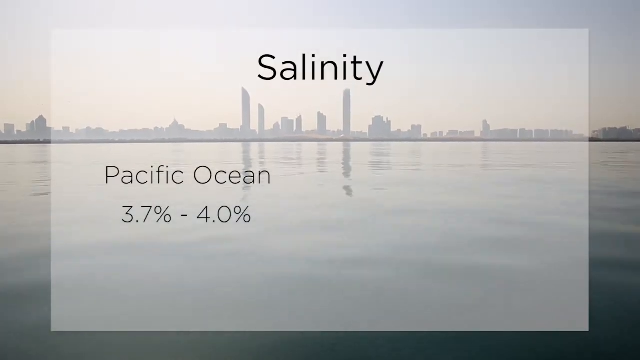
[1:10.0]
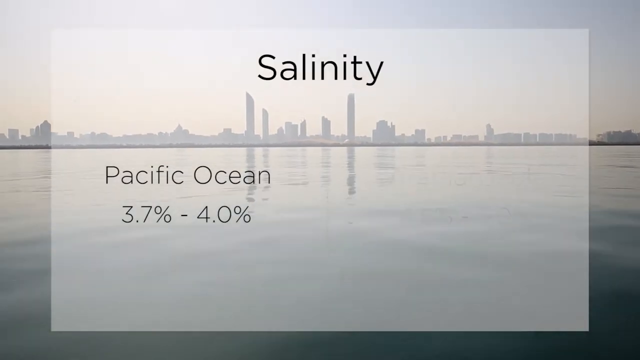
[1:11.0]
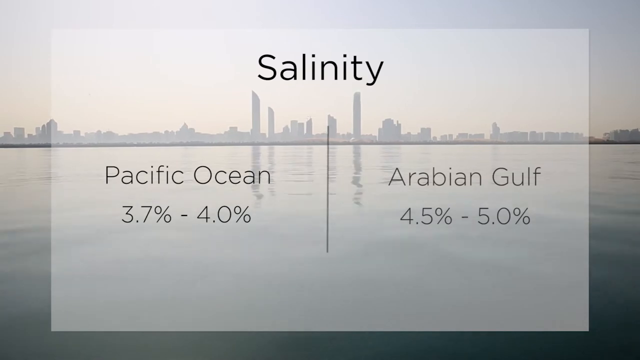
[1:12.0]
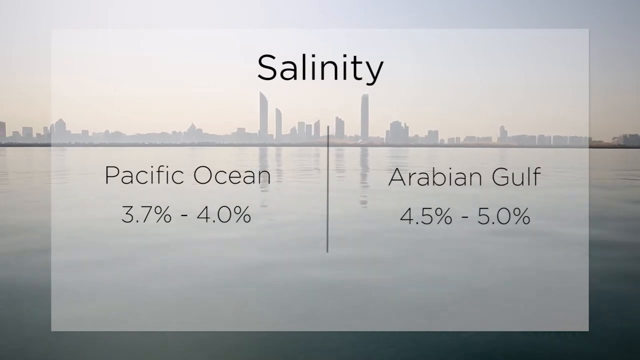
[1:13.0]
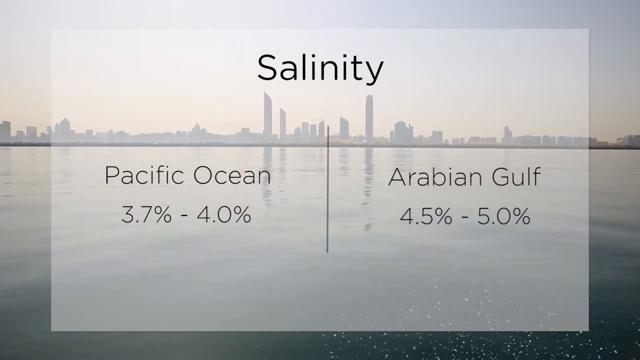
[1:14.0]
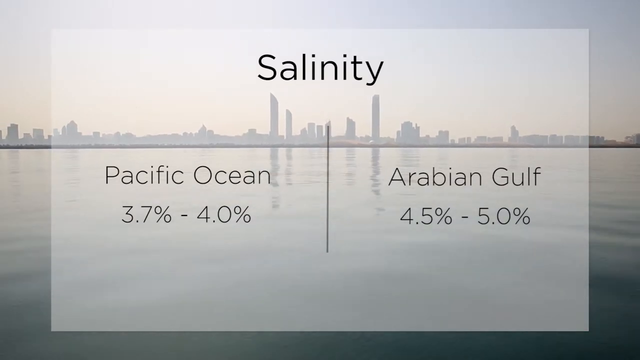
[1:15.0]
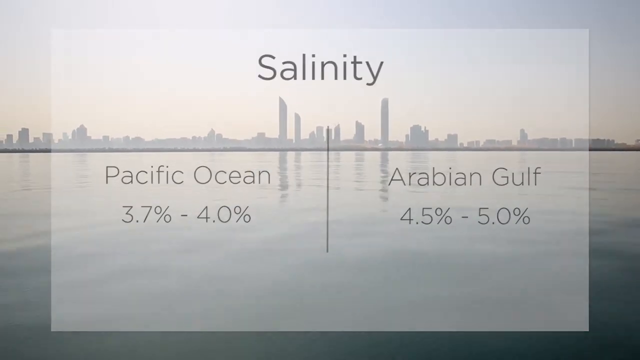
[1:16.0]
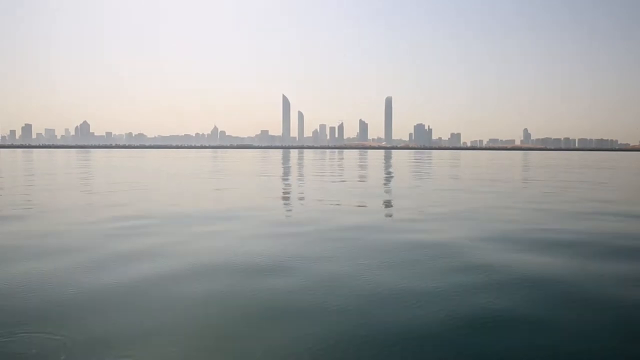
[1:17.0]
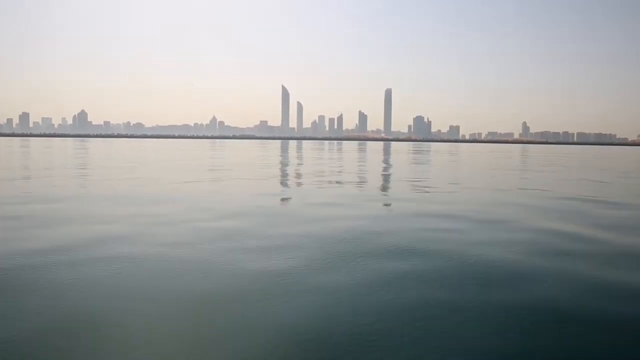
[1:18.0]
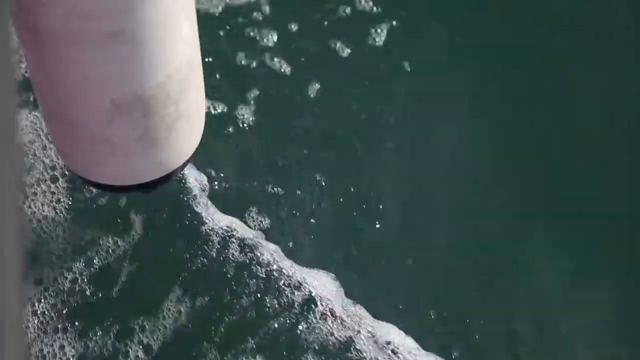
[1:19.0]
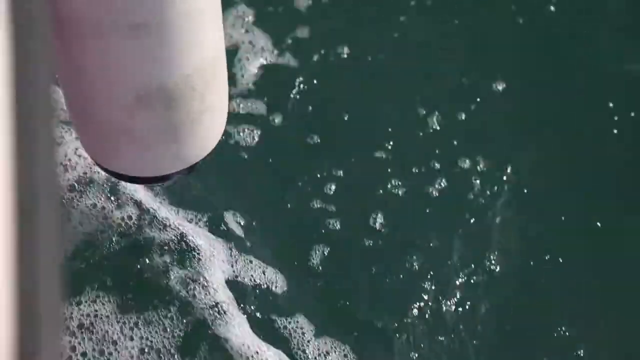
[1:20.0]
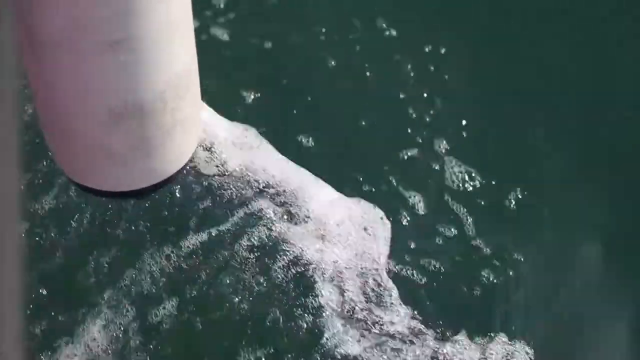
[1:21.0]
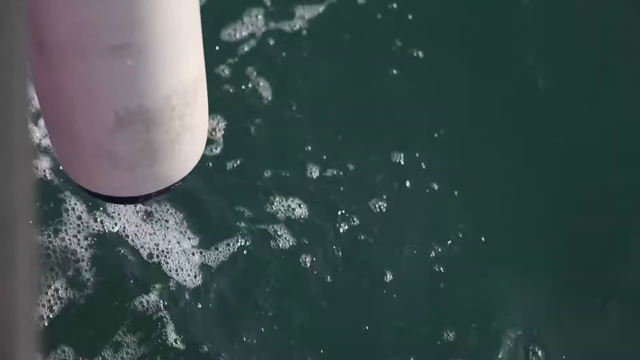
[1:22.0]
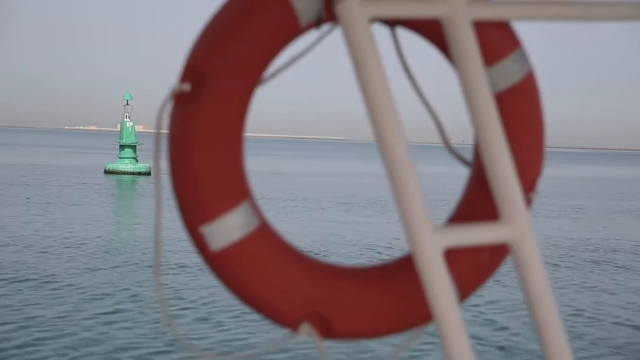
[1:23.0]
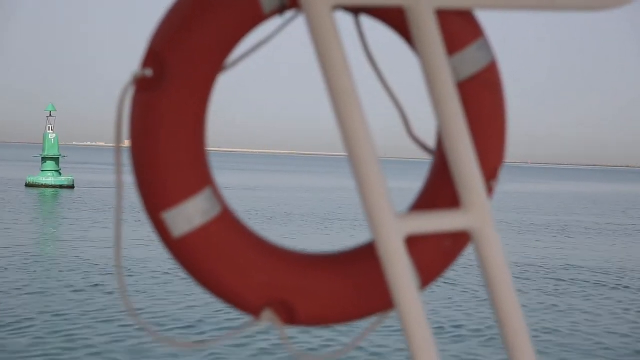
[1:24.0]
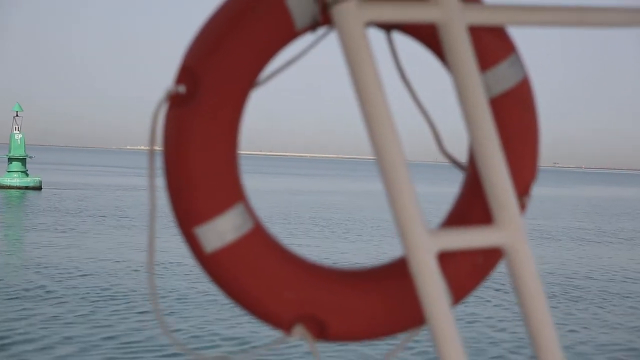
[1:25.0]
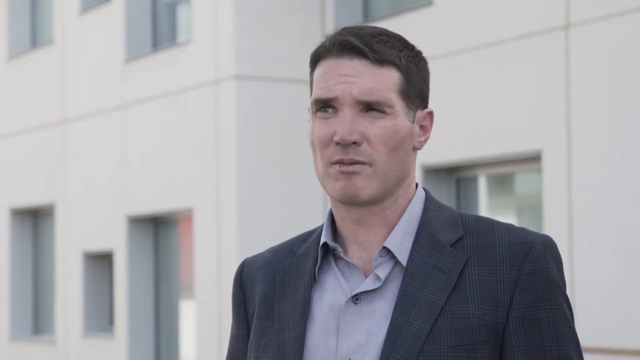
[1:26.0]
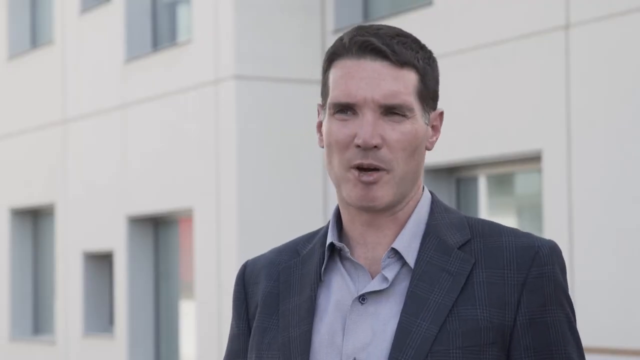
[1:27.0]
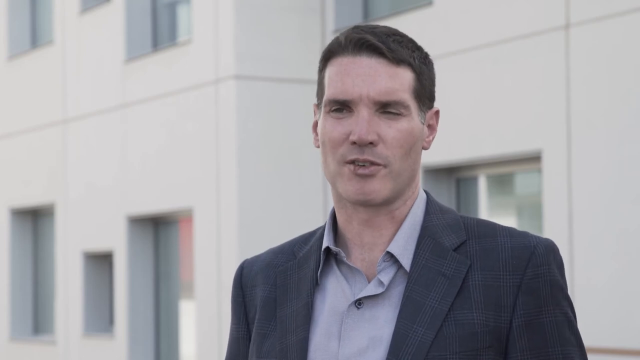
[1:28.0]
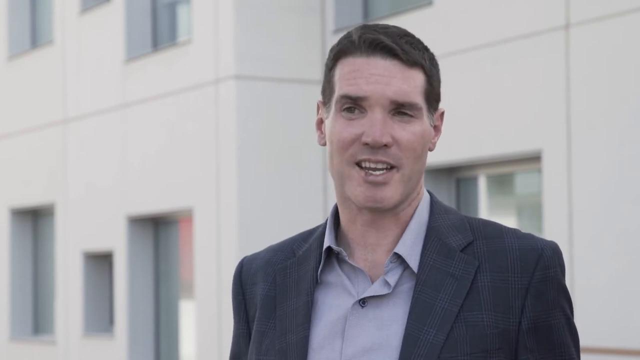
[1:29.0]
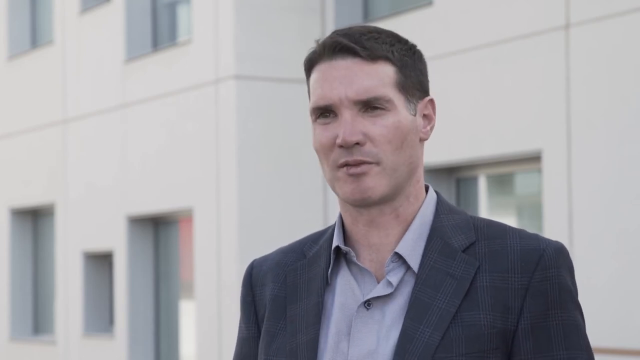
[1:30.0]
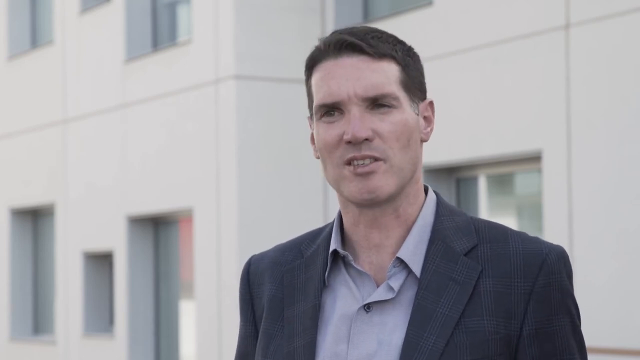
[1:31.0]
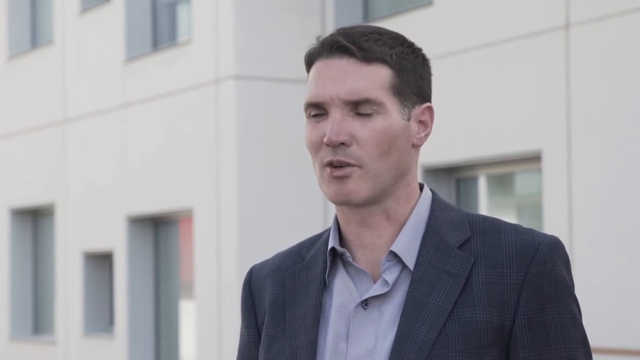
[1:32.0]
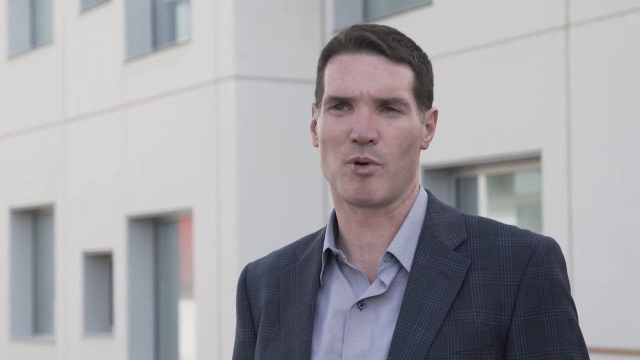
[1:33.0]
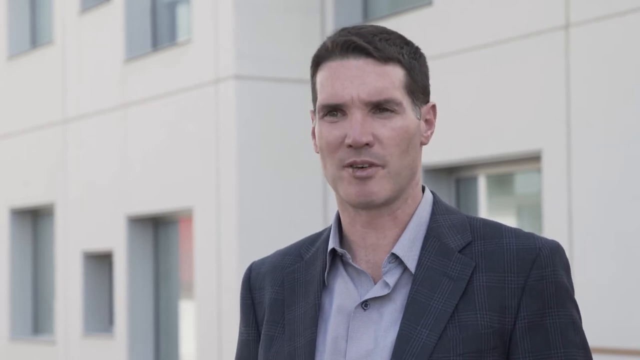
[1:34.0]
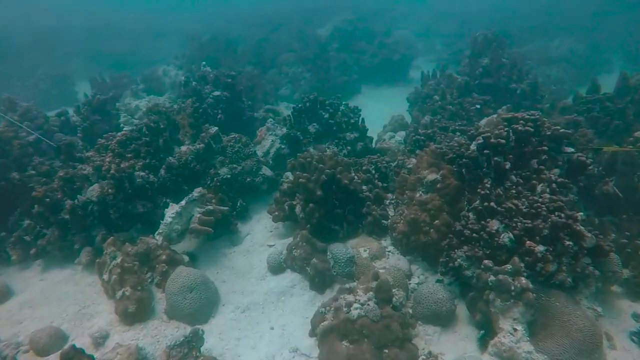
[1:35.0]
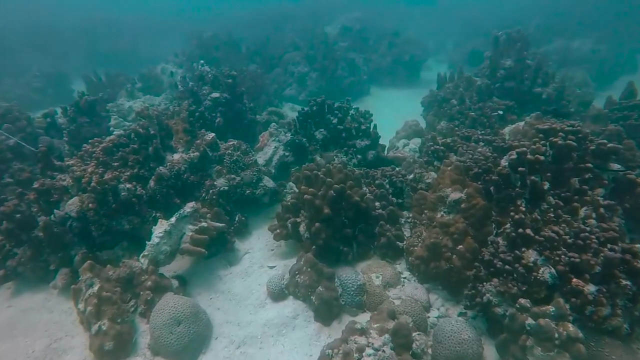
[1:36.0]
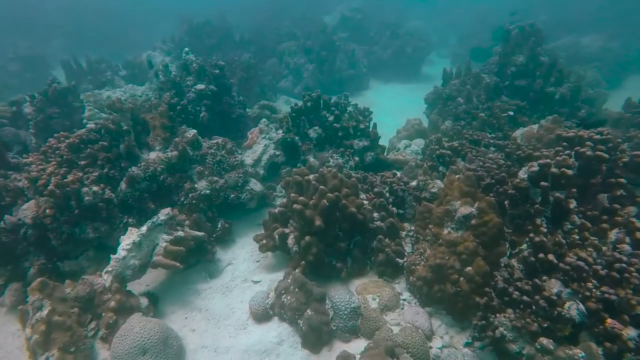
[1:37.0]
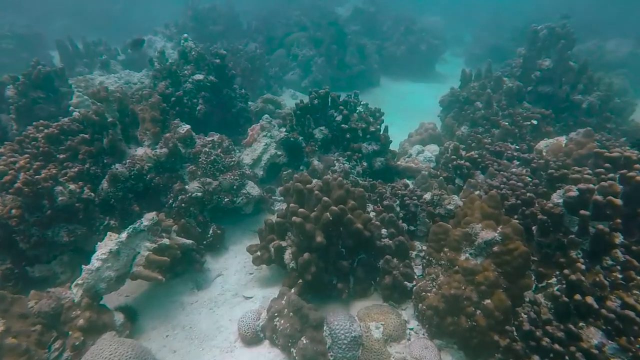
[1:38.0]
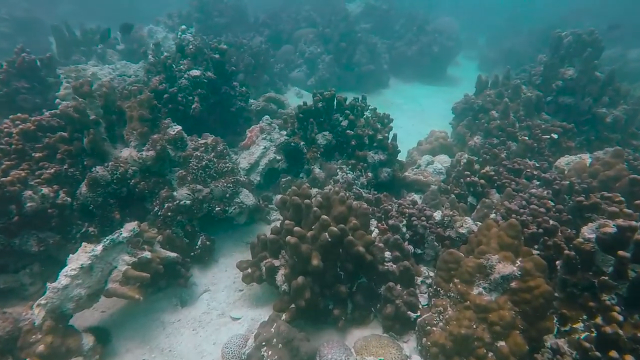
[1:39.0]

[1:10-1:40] Text appears over a shot of an ocean or body of water with a city skyline in the background. It reads "salinity", then "Pacific Ocean" with "3.7% - 4.0%" underneath. More text then reads "the Arabian Gulf" with "4.5% - 5.0%". Meanwhile, a sweeping shot travels along the body of water. Next comes a shot of what looks to be the side or bottom of the boat moving through the water, with white sea foam bubbles appearing. A shot from the circular lifesaver ring shows a green buoy in the middle of the water. The man in the suit speaks very professionally to the camera, and then red-brownish coral reefs are shown with light brown sand at their bottom.